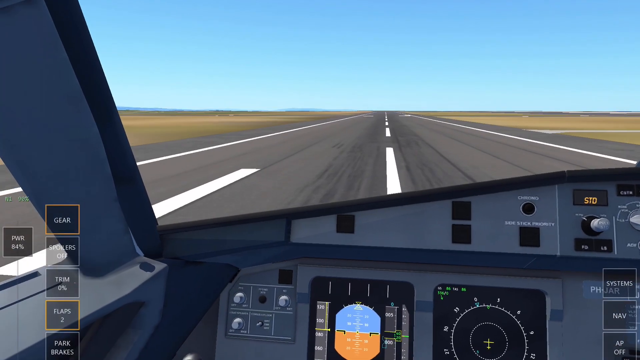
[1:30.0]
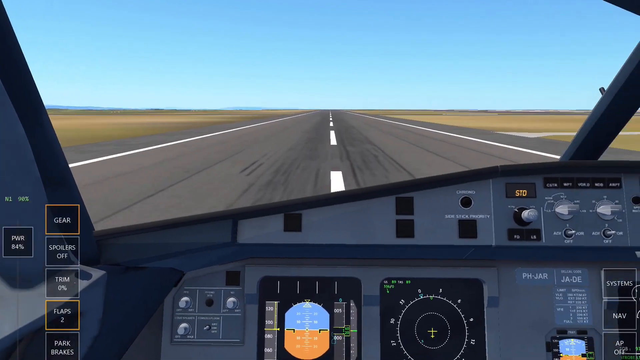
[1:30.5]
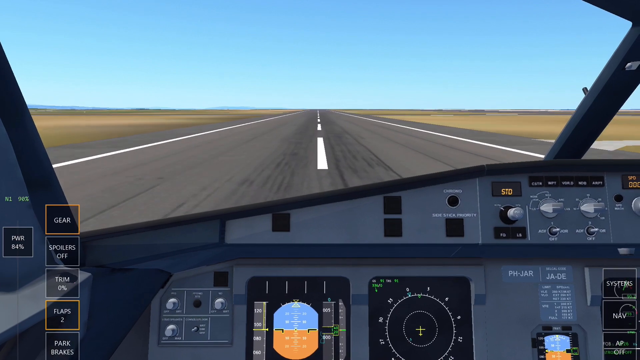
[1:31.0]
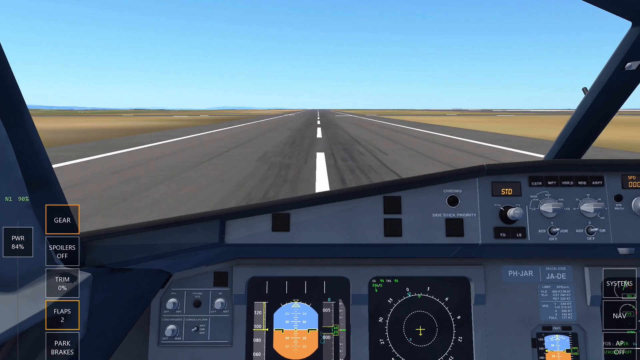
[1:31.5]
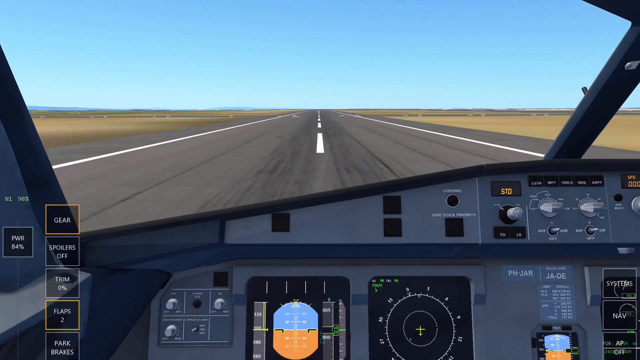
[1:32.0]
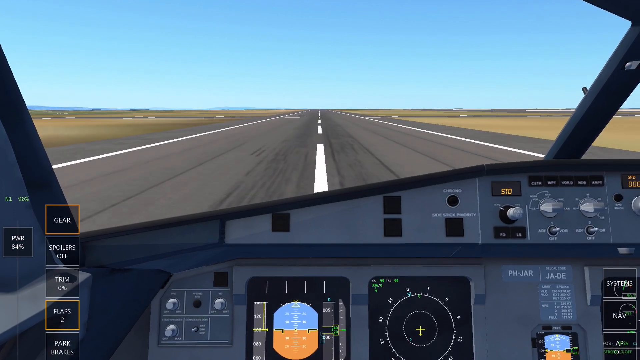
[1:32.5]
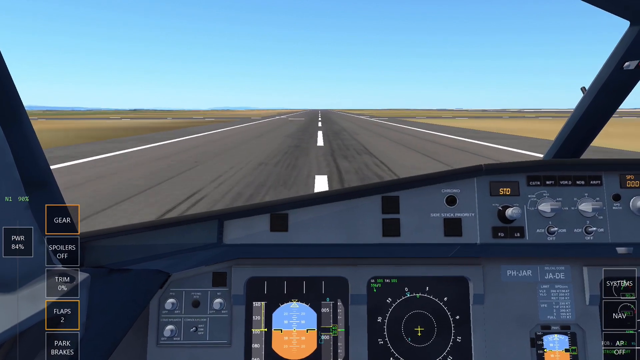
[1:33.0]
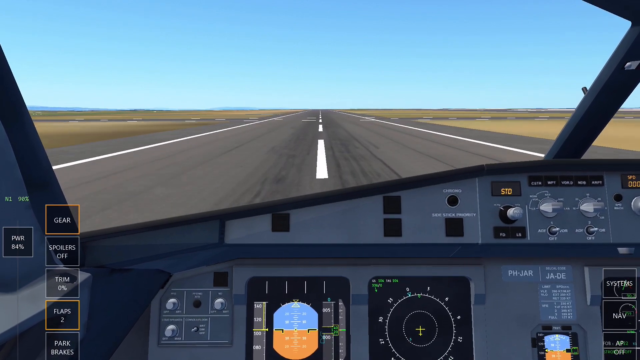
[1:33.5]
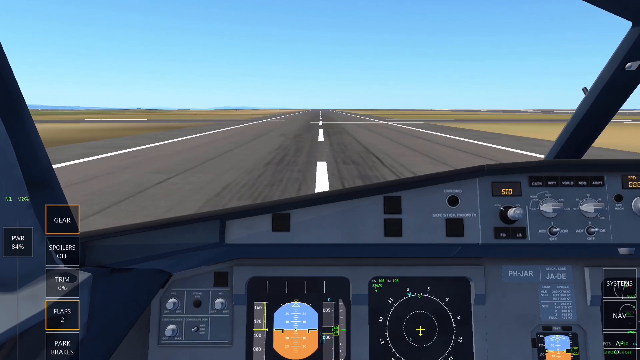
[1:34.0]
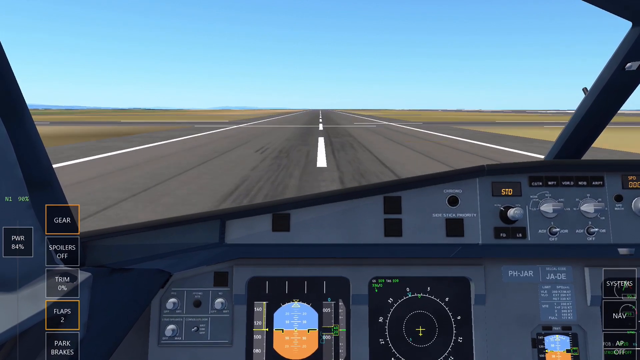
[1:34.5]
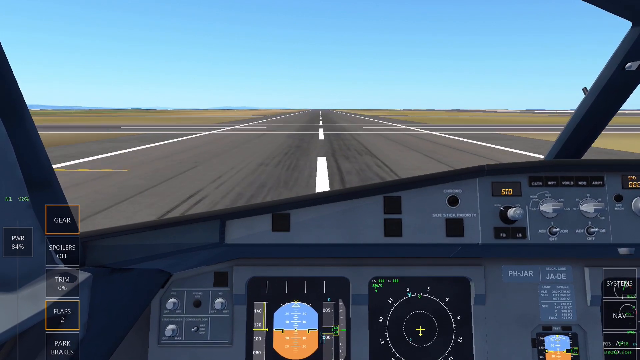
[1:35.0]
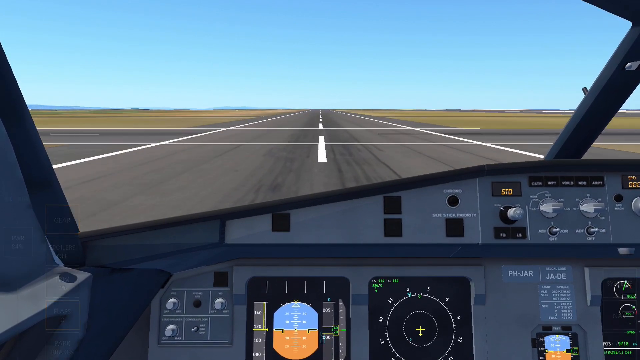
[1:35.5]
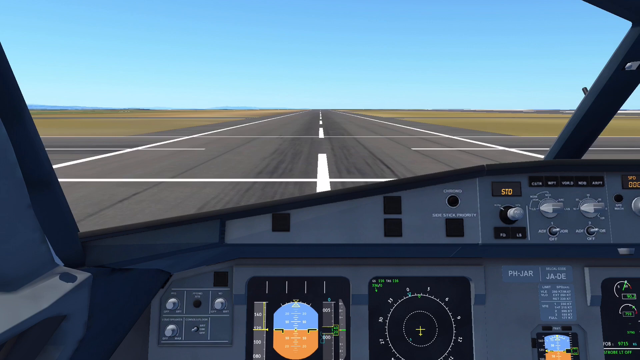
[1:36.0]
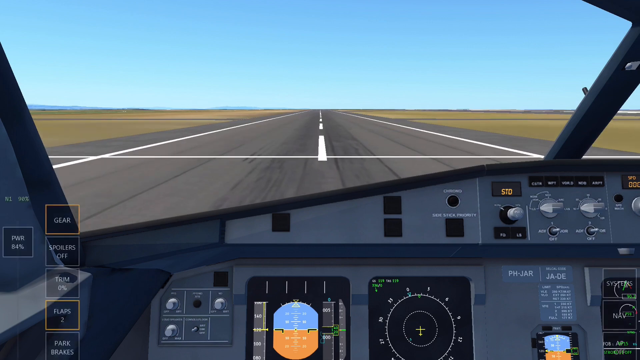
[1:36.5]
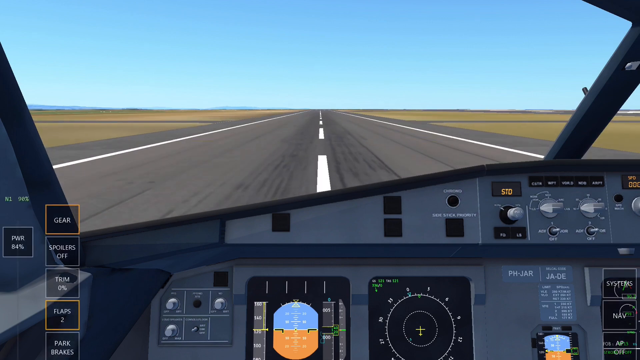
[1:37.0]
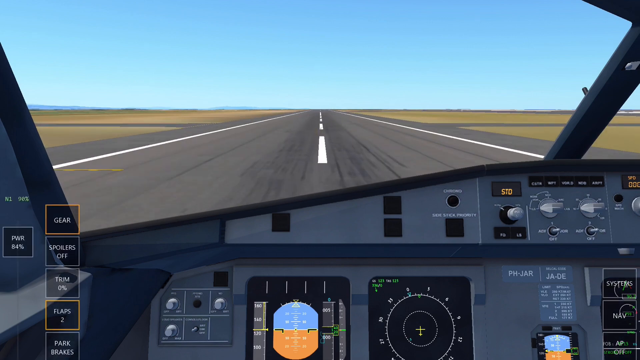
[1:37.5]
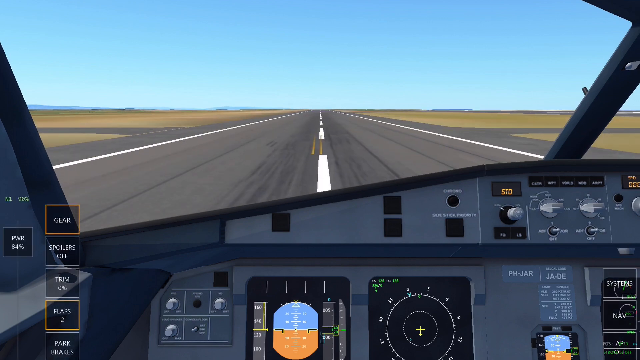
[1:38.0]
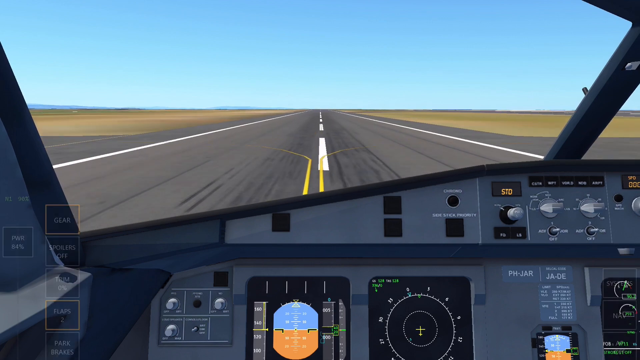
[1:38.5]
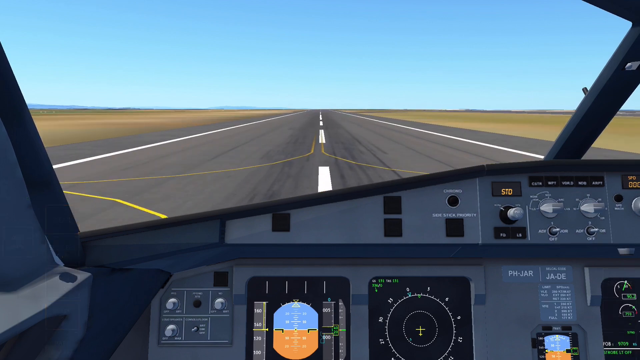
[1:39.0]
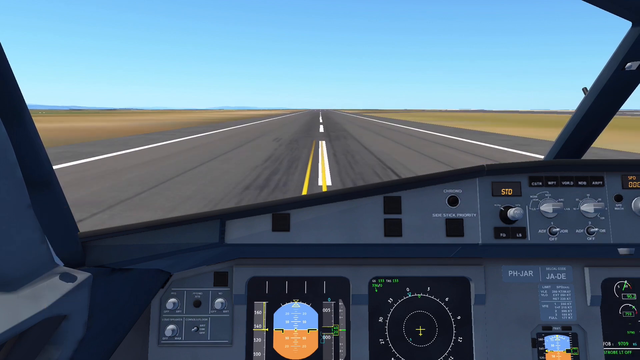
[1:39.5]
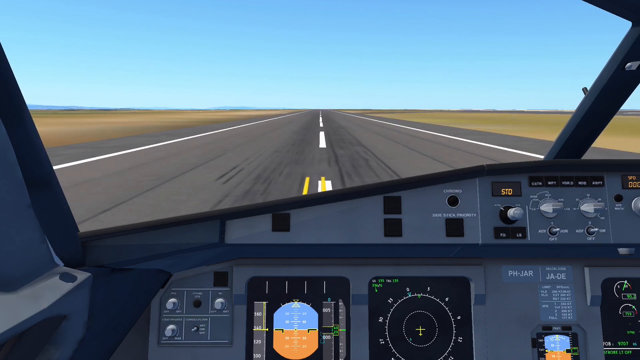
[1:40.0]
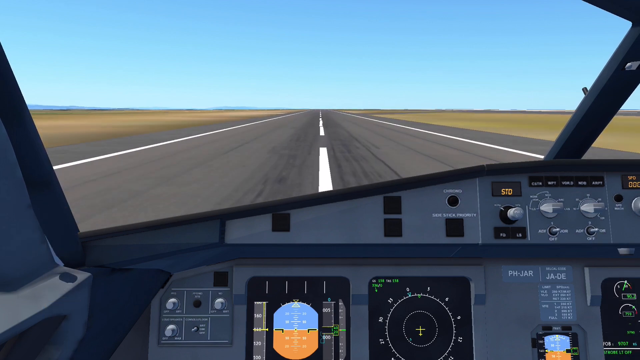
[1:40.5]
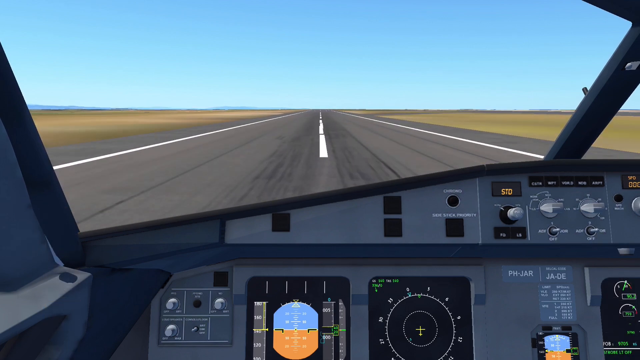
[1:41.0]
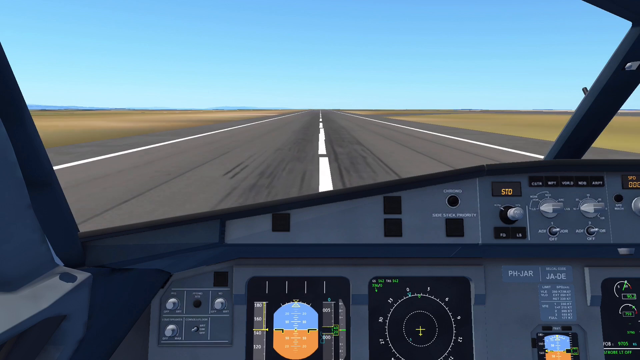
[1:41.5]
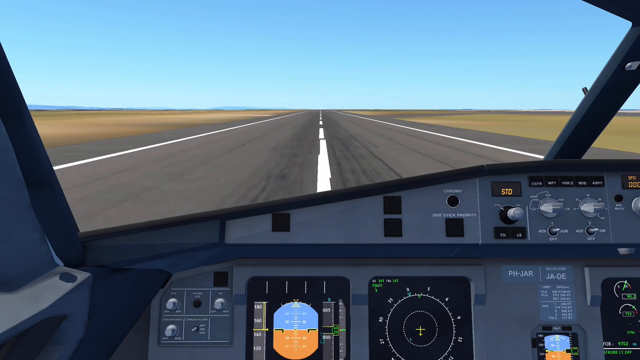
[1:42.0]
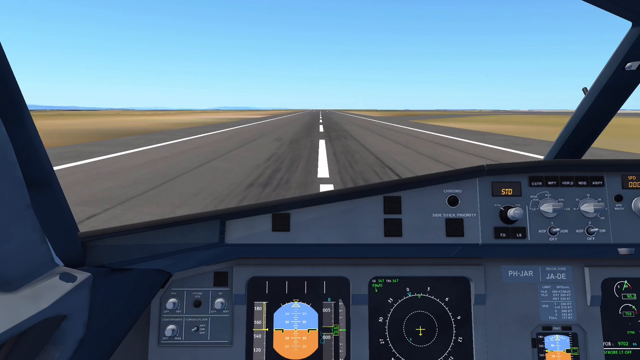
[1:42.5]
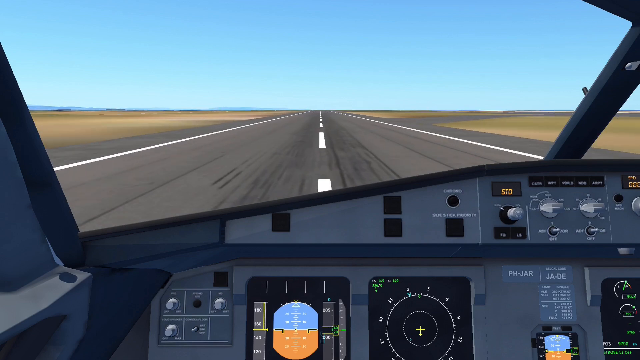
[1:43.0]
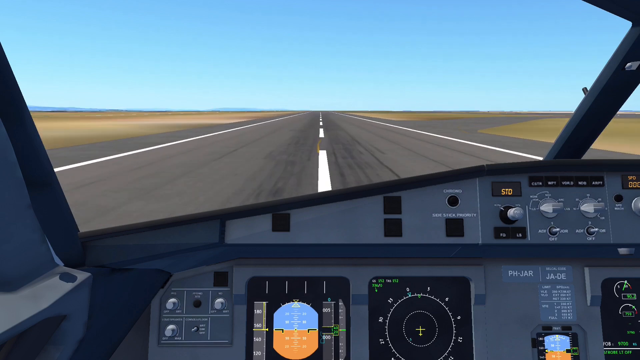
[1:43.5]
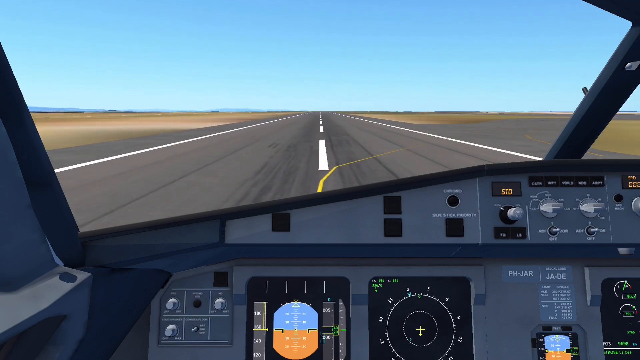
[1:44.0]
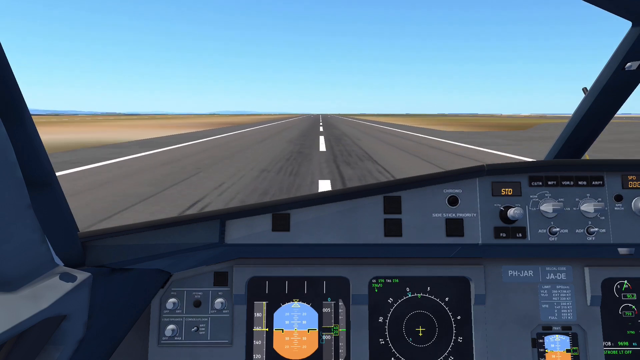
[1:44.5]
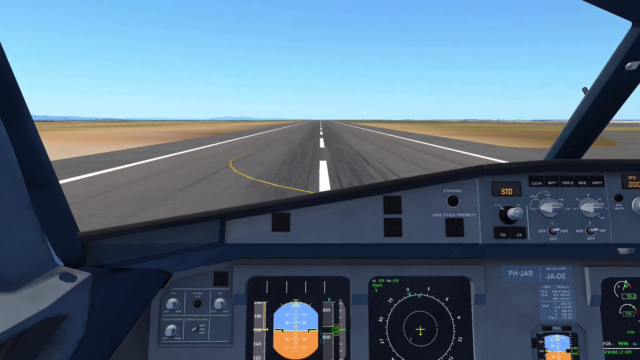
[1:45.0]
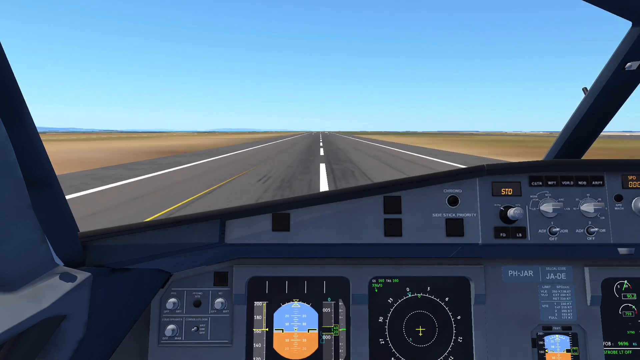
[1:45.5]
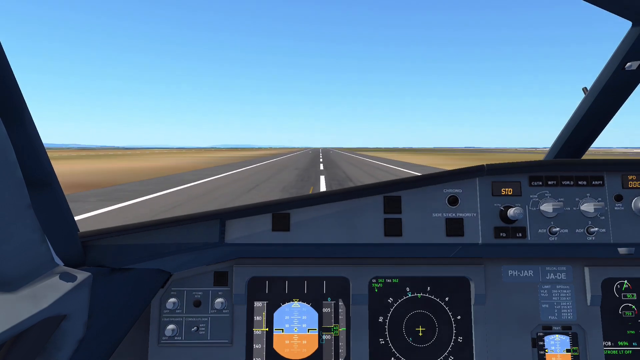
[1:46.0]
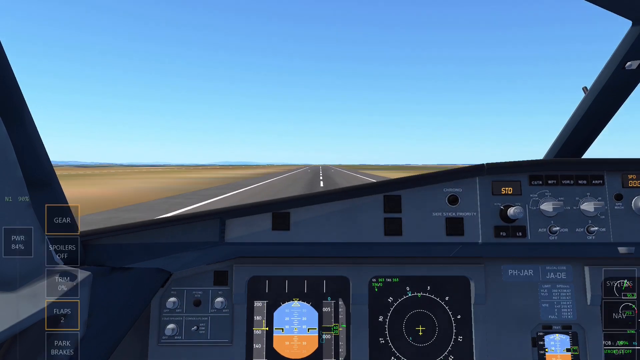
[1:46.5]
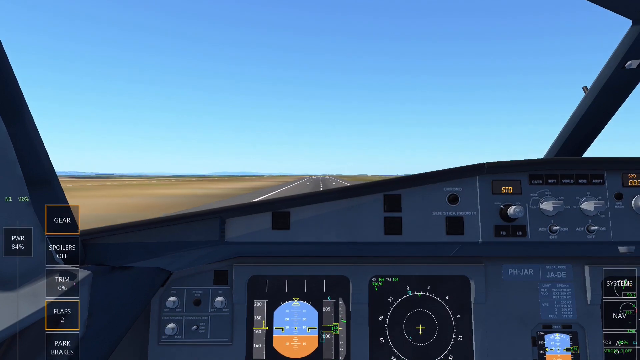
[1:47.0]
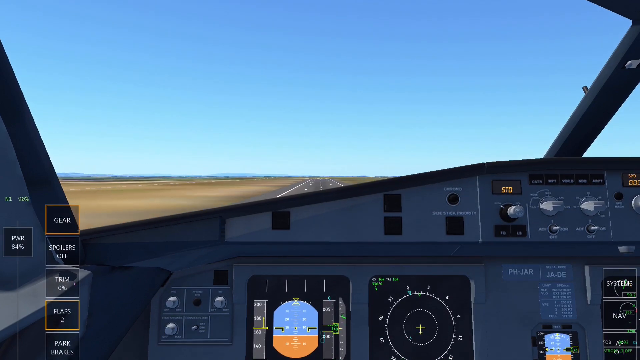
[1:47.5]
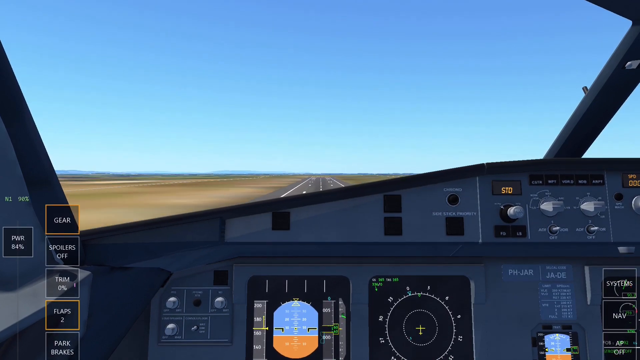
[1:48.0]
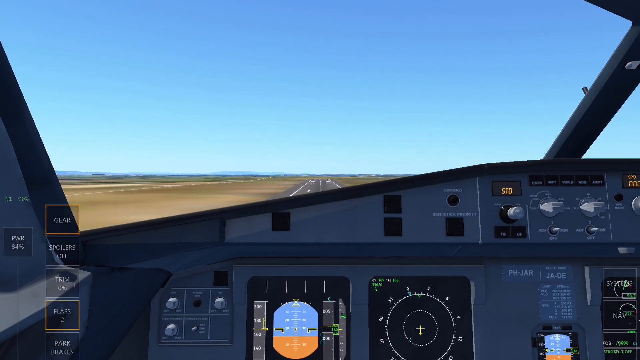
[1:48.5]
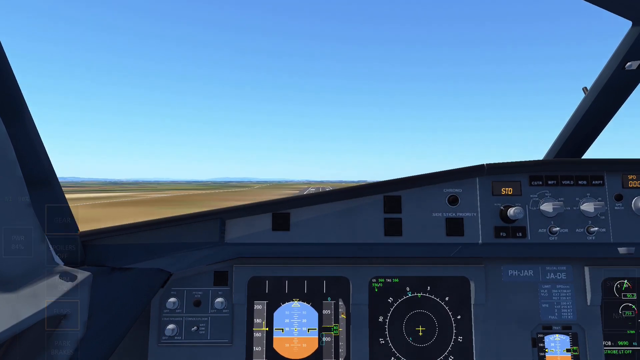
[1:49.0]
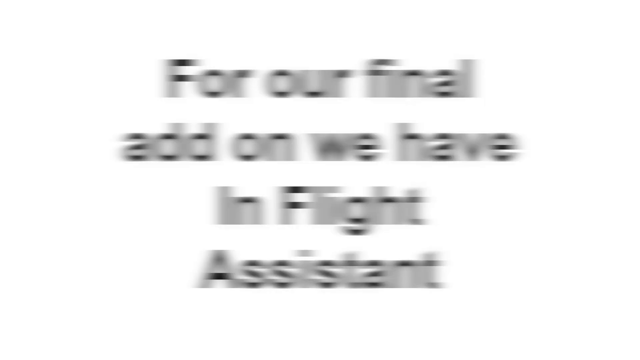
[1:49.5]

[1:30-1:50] In a flight simulation app, a jet aircraft taxis down the runway, seen from inside the cockpit looking out the window. It slowly picks up speed, following the white lines, then the nose of the aircraft lifts off and the ground gets smaller below as the jet takes flight. At the end, text on the screen reads "for our final add-on we have in-flight assistant."